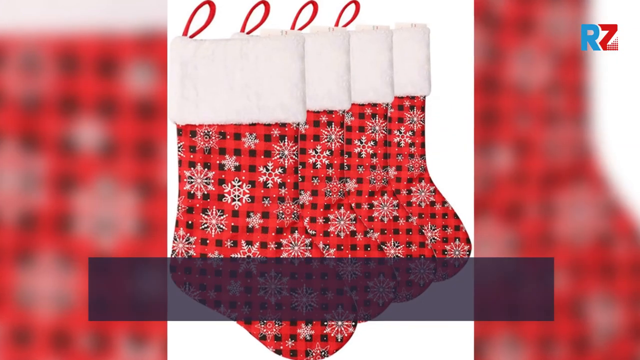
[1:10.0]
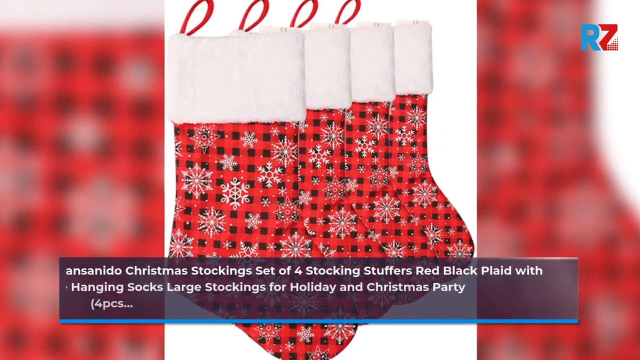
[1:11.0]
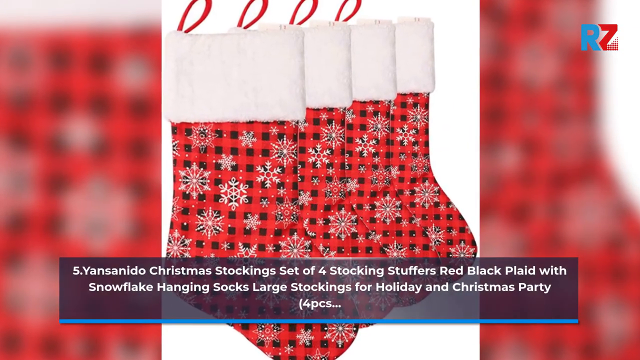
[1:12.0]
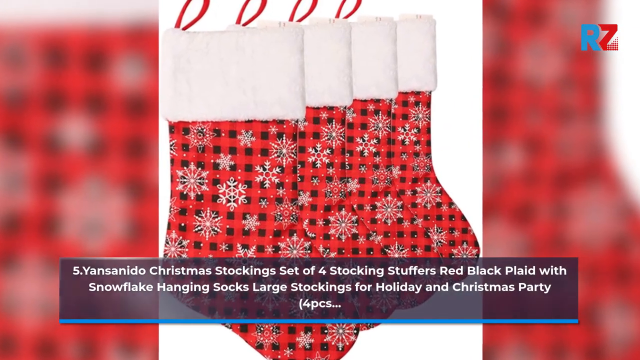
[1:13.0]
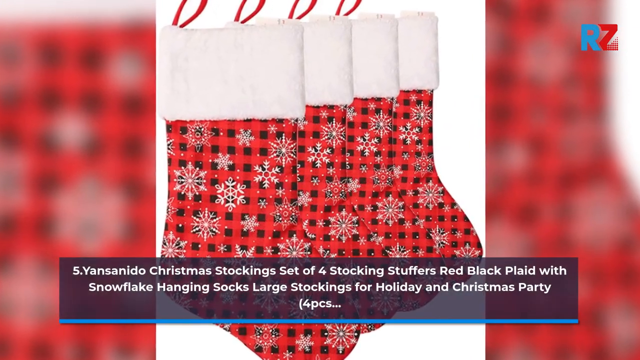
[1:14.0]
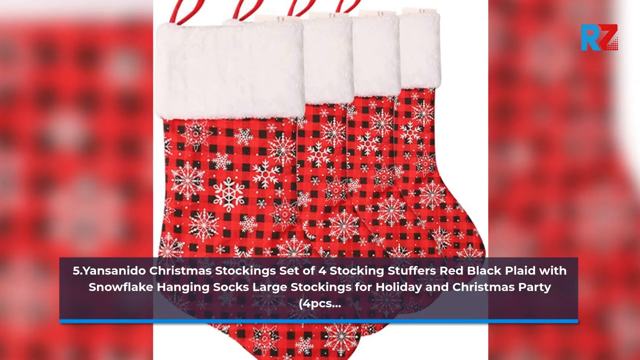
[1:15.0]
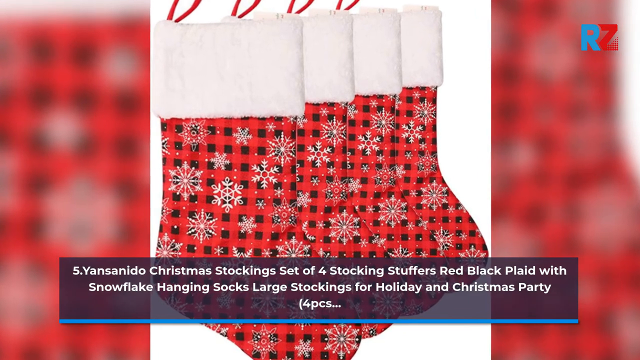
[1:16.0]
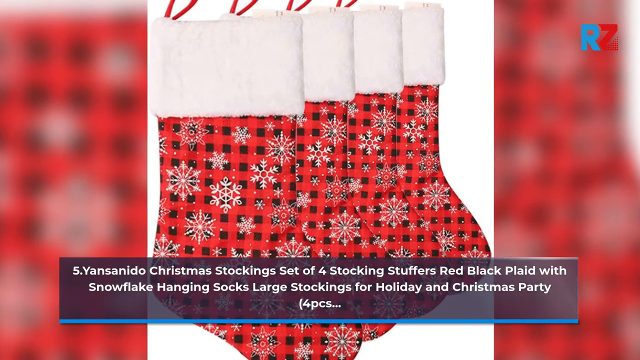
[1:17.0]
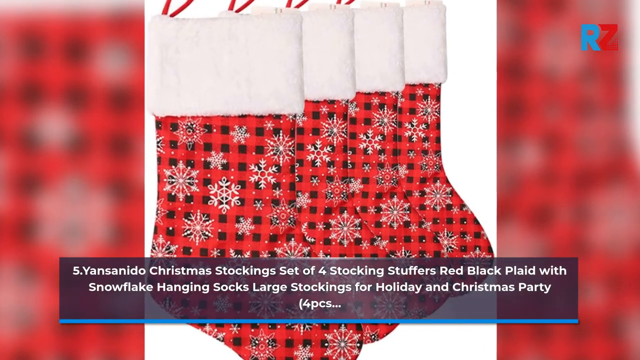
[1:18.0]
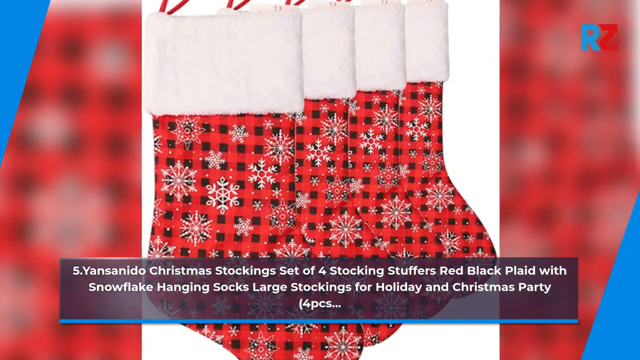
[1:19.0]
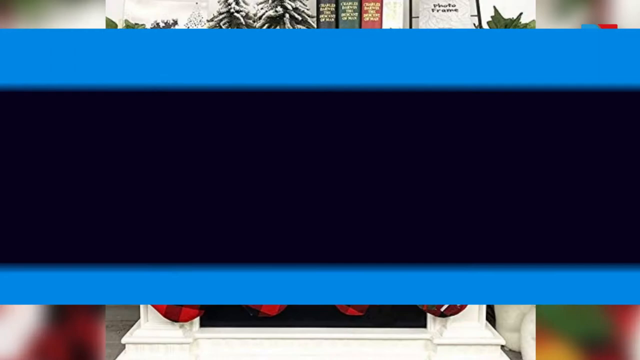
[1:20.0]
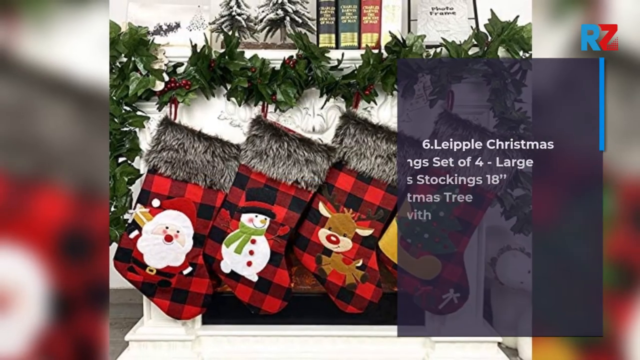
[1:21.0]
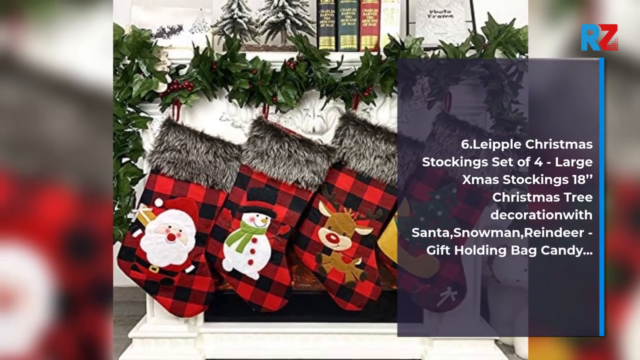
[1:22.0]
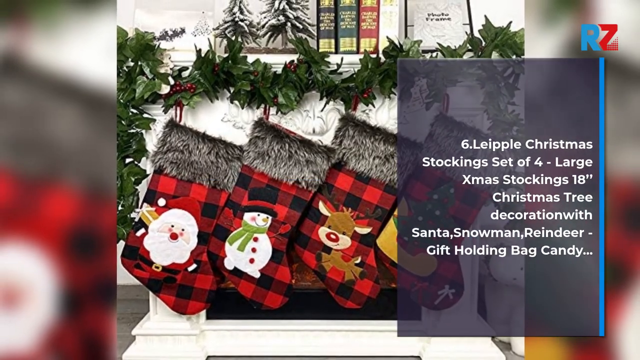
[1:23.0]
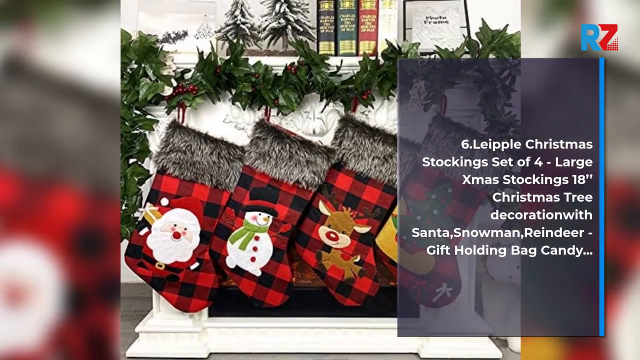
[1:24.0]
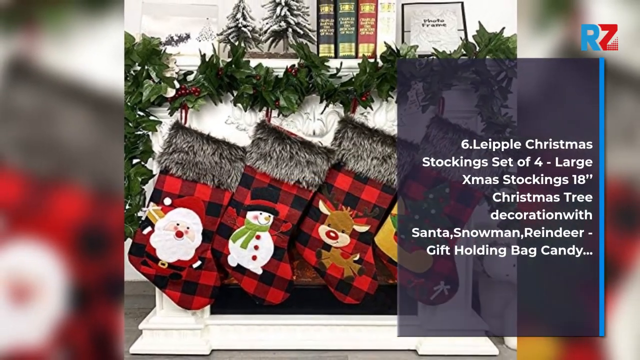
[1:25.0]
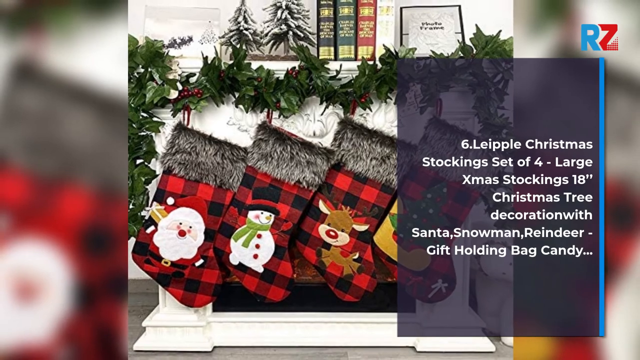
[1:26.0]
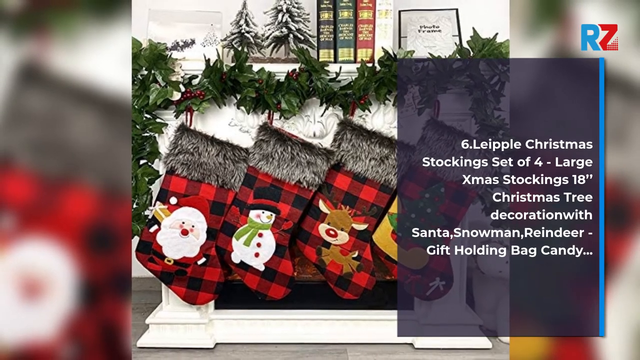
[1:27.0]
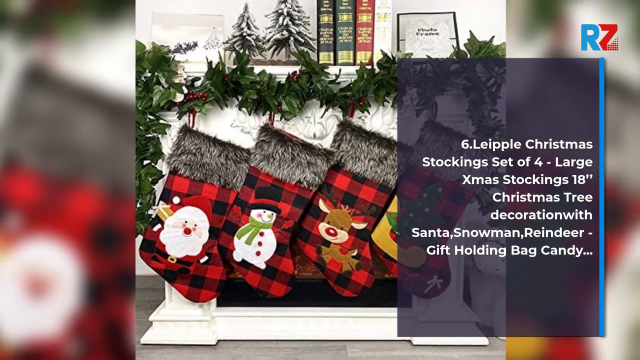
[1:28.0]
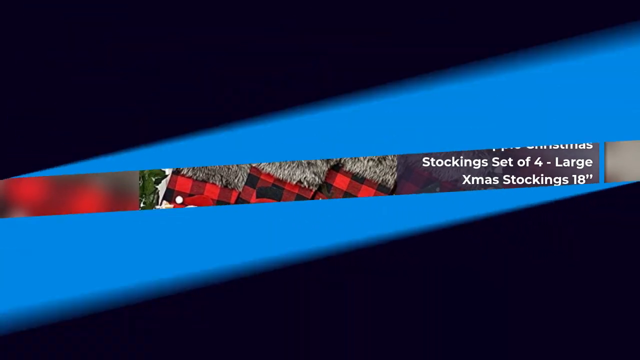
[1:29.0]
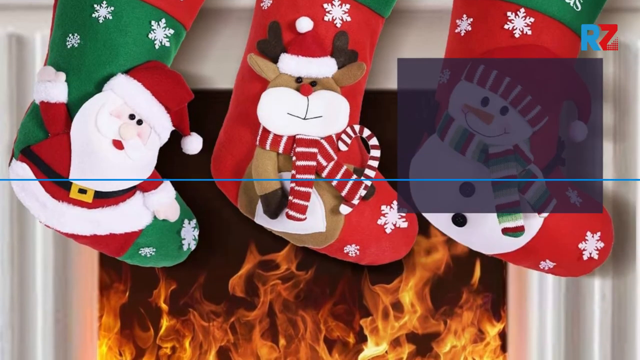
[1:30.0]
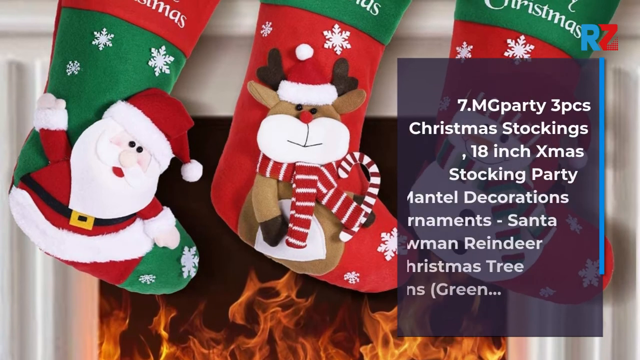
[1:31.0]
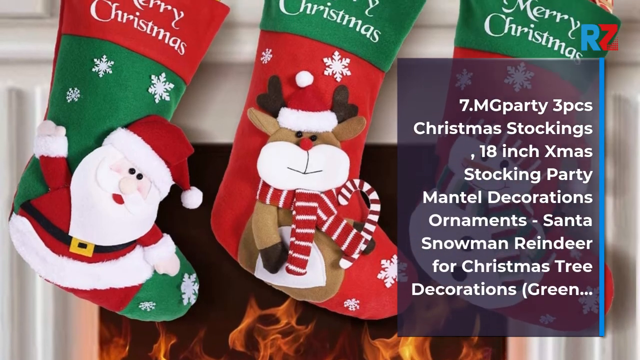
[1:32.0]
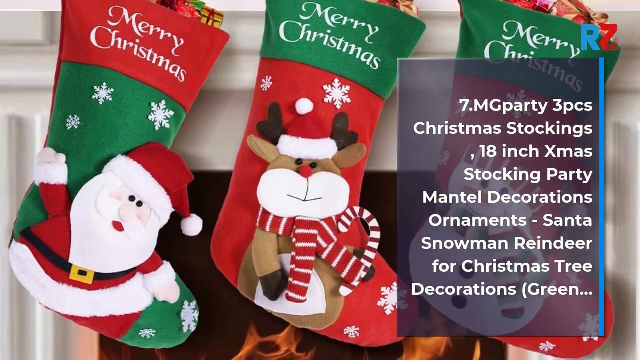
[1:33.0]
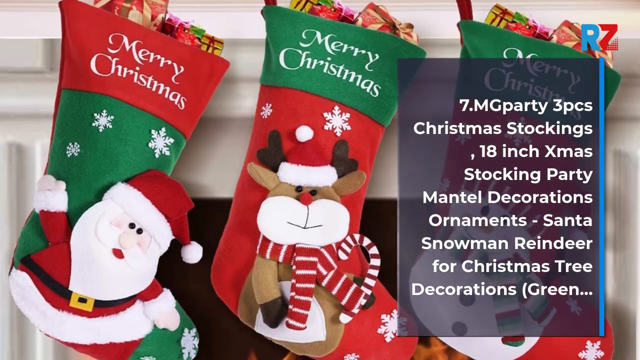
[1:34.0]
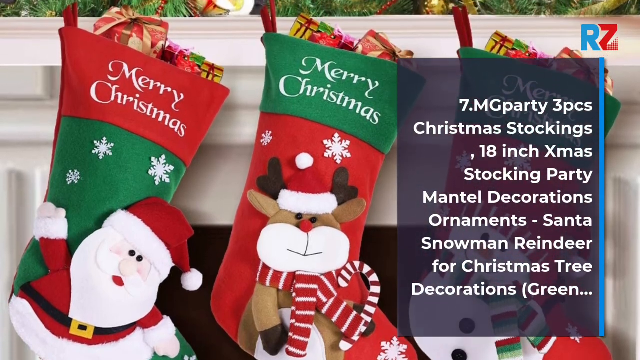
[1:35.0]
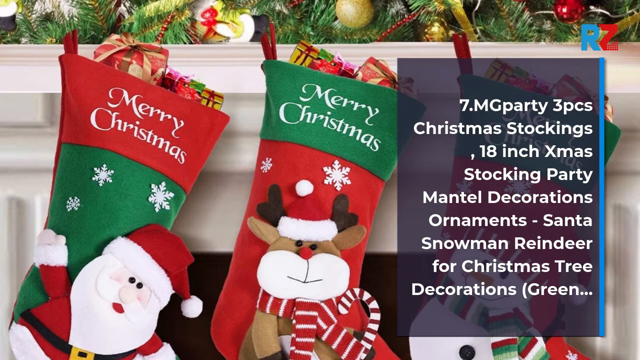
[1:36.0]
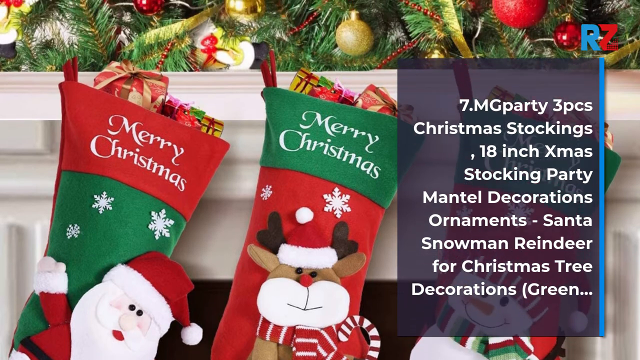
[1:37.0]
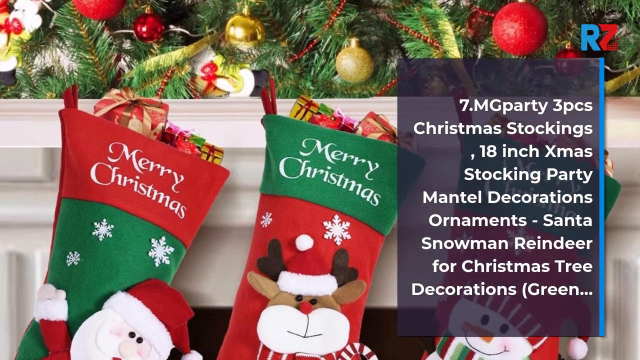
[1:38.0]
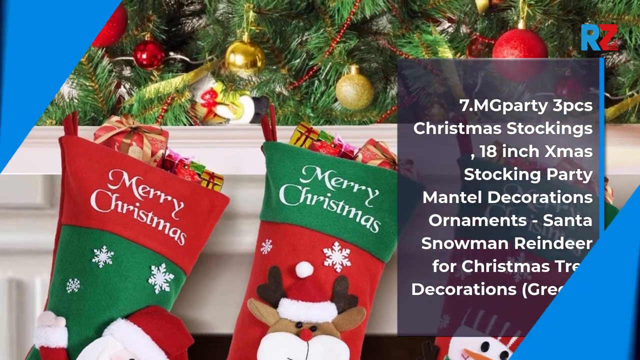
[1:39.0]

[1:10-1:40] Number 5 is the Yes, I Need a Christmas Stocking set of 4 stocking stuffers, red black plaid with snowflake hanging socks, large stockings for holiday and Christmas party, 4 piece. It is a basic design: a crisscross knitting pattern in red and black with a bunch of snowflakes all over it. There are apparently 4 in the picture, and the snowflakes are all different designs. Number 4 is the WinDooDoo 4 piece Christmas stocking, 20 inch large buffalo plaid check with white fox plush, for home decor or fireplace hanging ornament, and it is white. All four designs are different. They are red and black checkered, and on top they have a white deer, a white snowman, and a white giant snowflake; the very last one has a big white Christmas tree with other snowflakes on it.